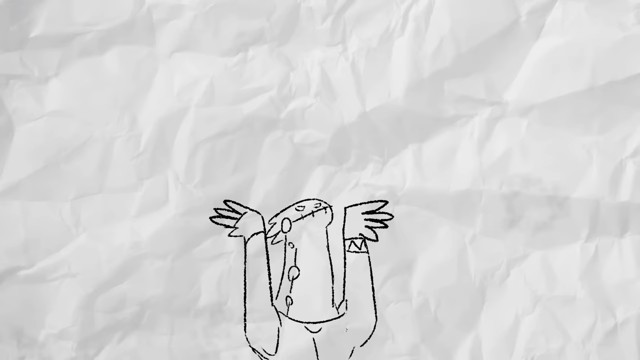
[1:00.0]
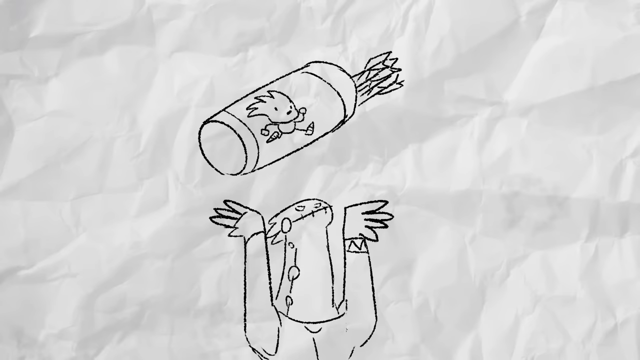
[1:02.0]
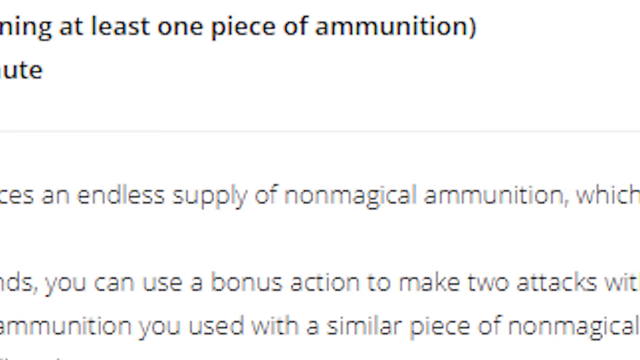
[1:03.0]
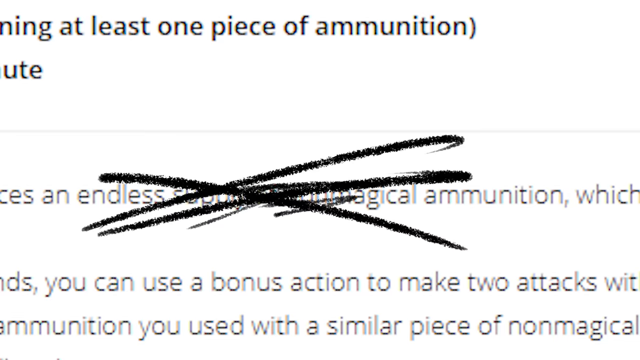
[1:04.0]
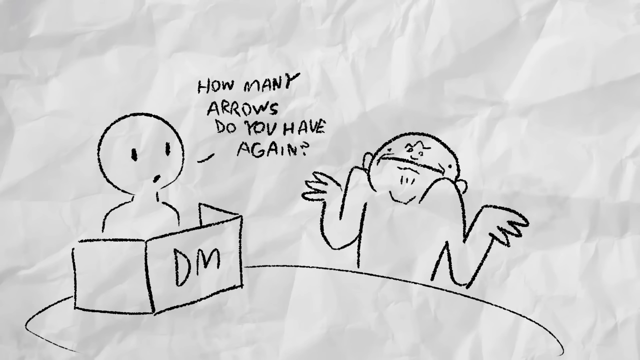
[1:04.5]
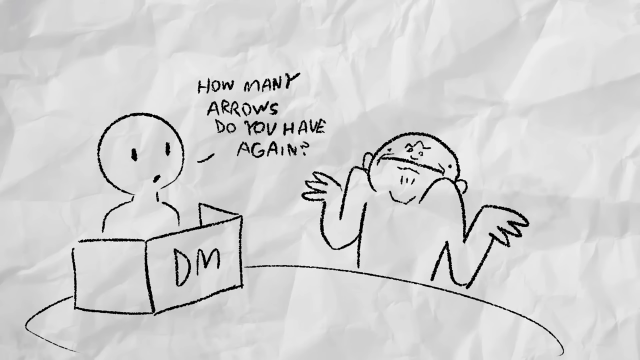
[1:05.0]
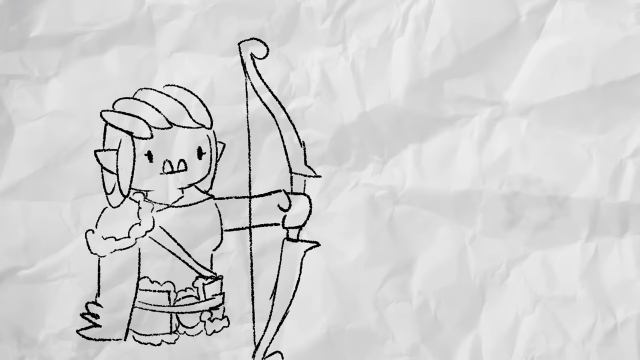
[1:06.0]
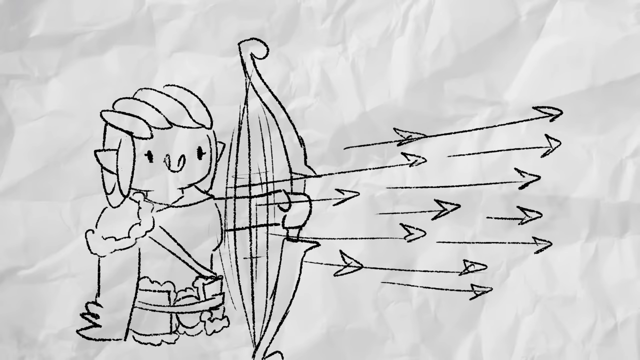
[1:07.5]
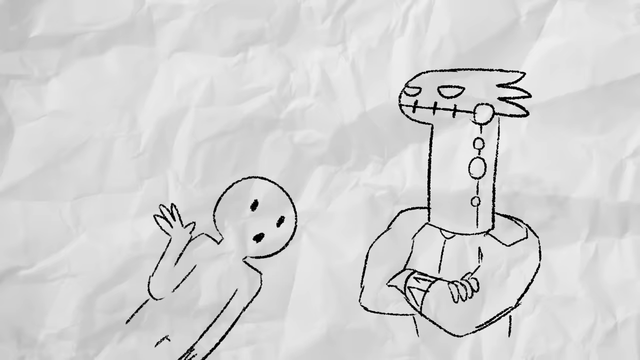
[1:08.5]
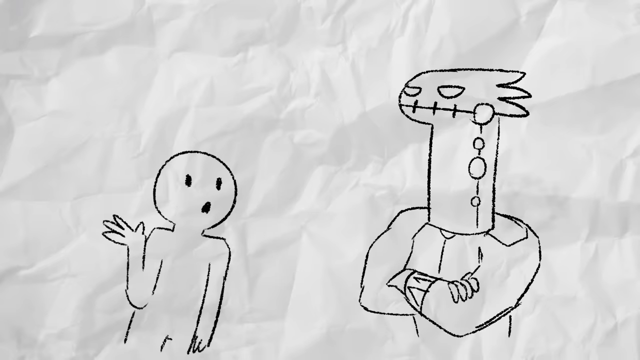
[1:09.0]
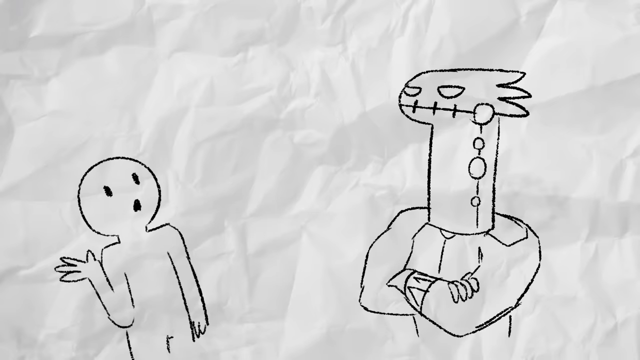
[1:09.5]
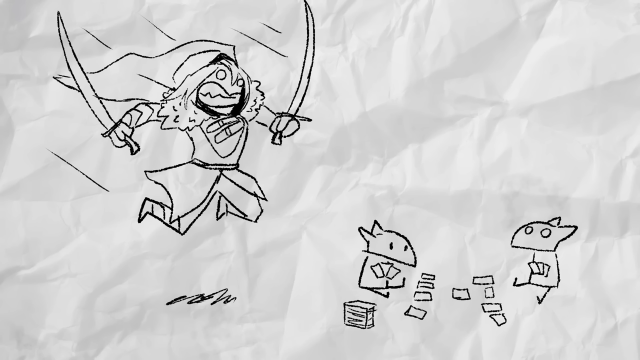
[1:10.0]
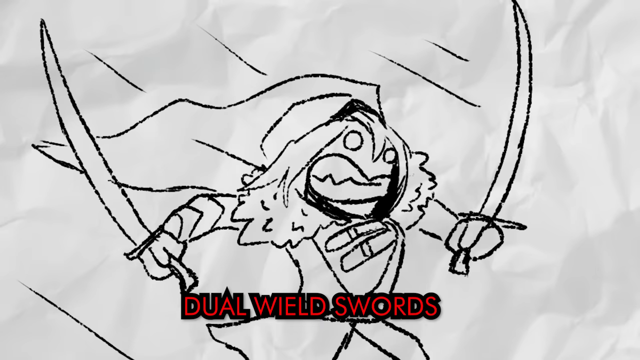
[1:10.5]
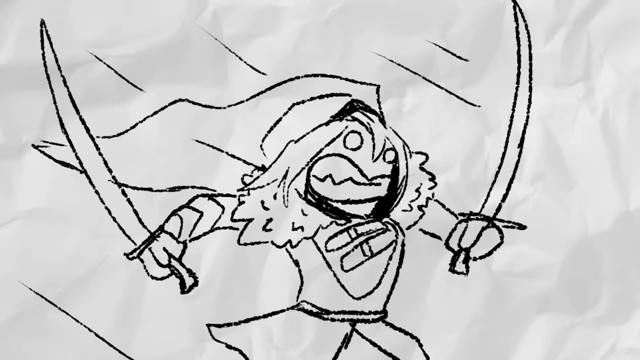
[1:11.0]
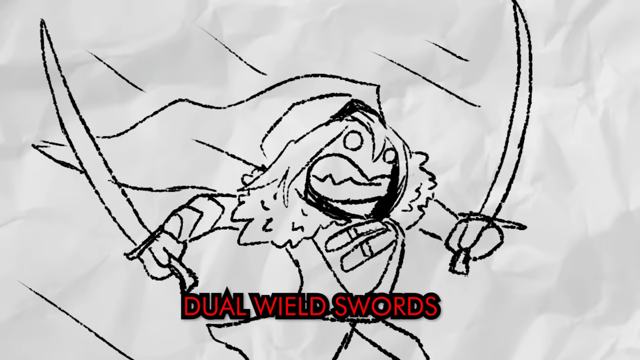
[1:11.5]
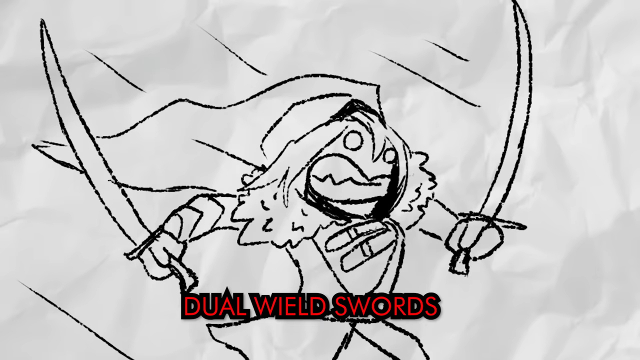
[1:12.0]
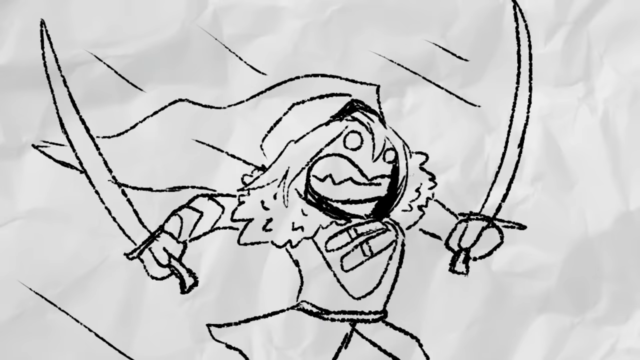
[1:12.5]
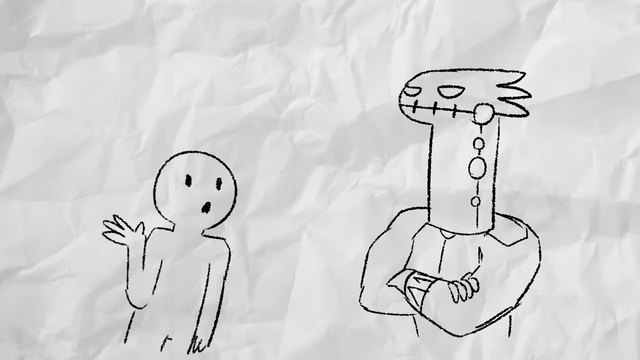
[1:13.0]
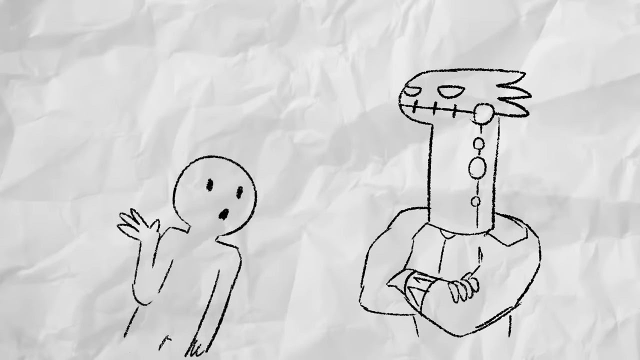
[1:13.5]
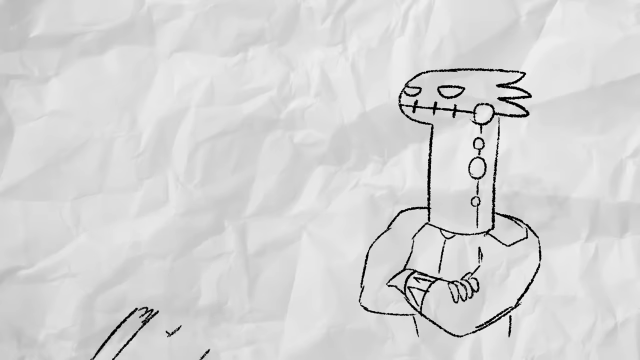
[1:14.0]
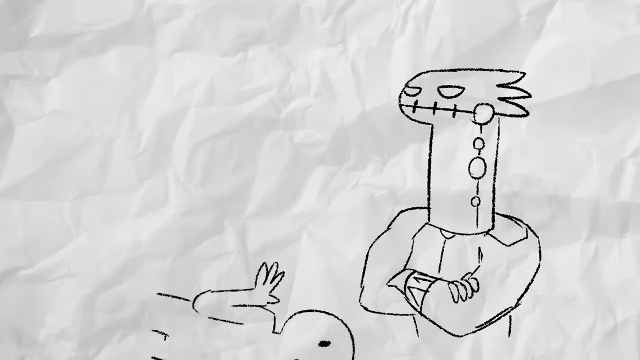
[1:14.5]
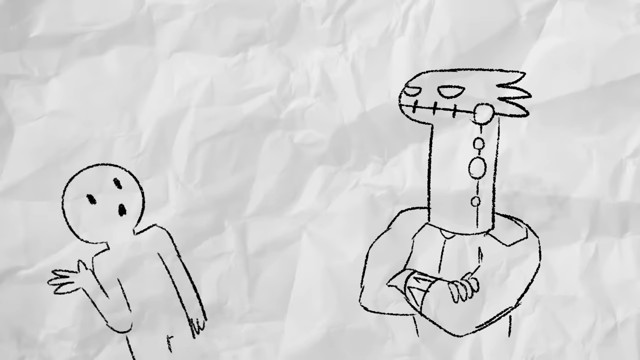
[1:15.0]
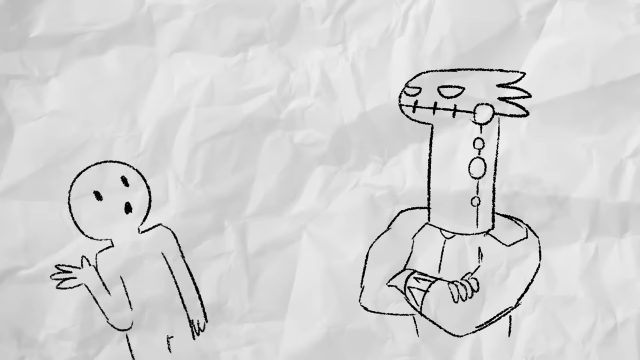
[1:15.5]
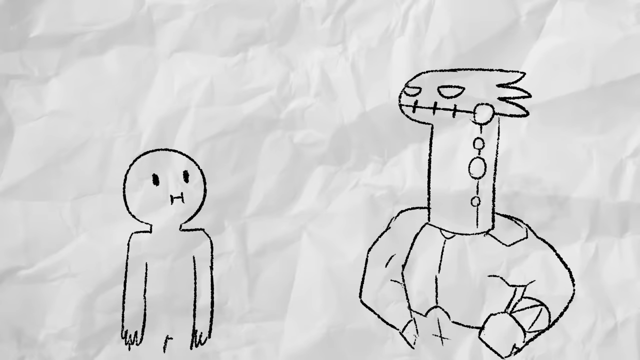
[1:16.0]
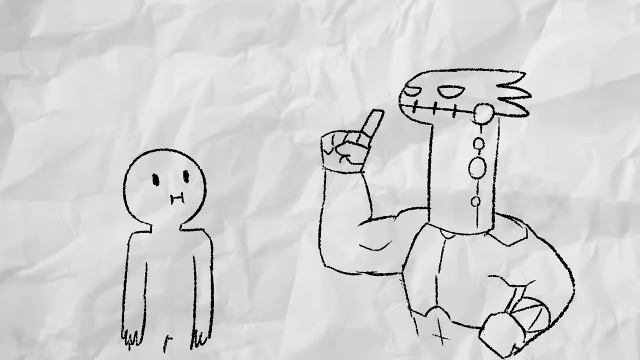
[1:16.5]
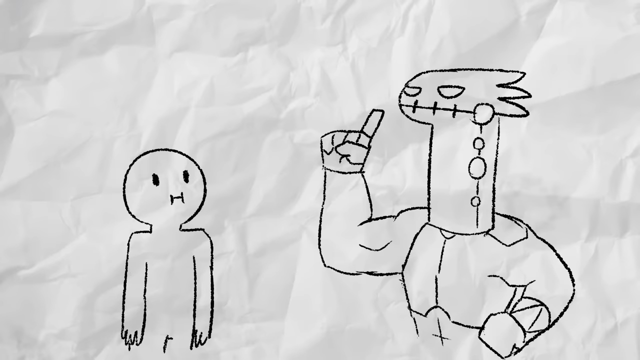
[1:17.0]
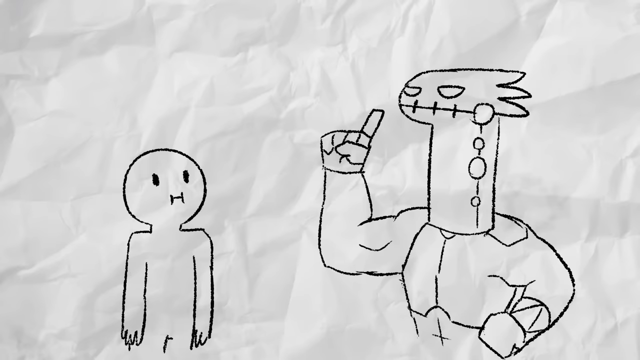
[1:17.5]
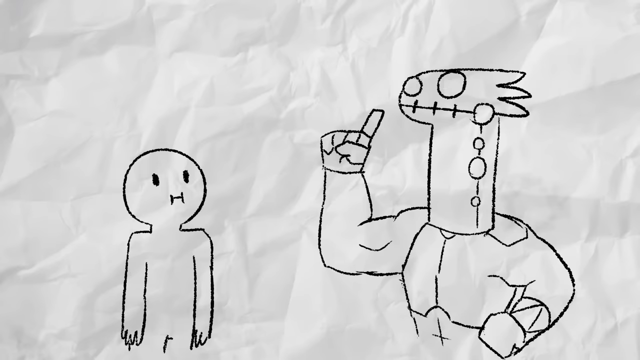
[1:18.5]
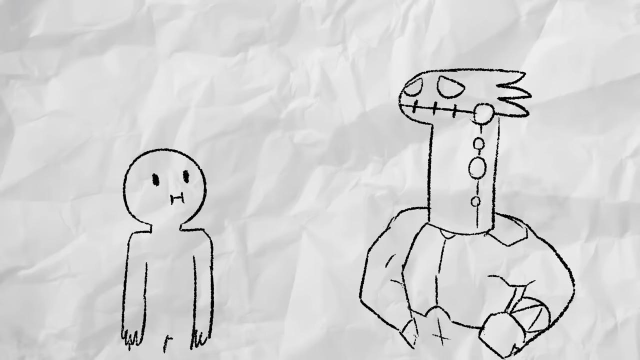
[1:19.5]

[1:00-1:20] One of the lizard people, drawn in black, has their hands up, with a thing that holds bows and arrows above them. Text says "at least one piece of ammunition," something is shown crossed out, and then it says "how many arrows do you have again?" The person looks confused at being asked. It cuts to somebody holding a bow and arrow, seemingly a woman, shooting many arrows, then to somebody confused. It cuts back to the person with the dual-wield swords jumping towards the kids, with "dual-wield swords" on the screen in red. Somebody asking questions spins up and down towards the lizard person, who puts their finger up and looks confused.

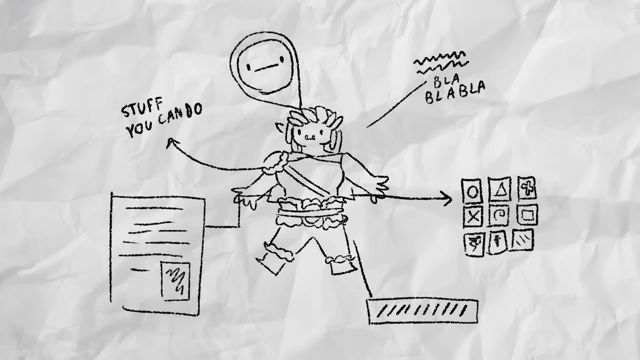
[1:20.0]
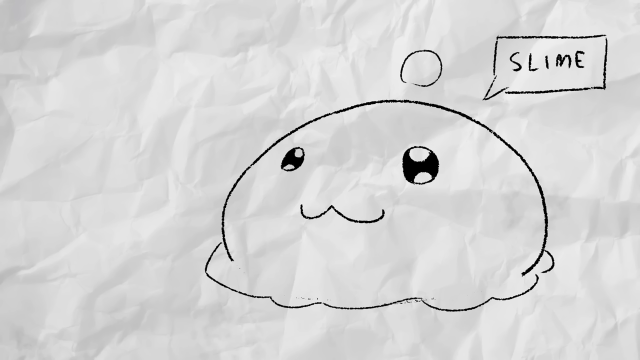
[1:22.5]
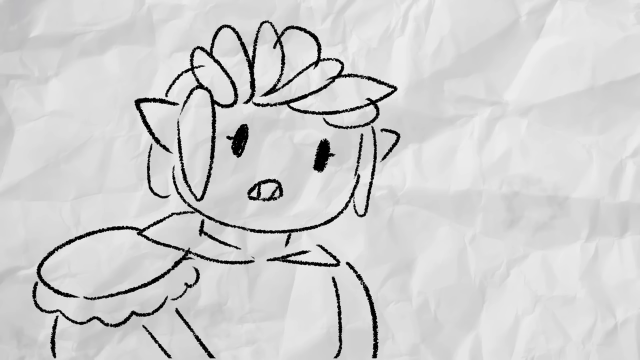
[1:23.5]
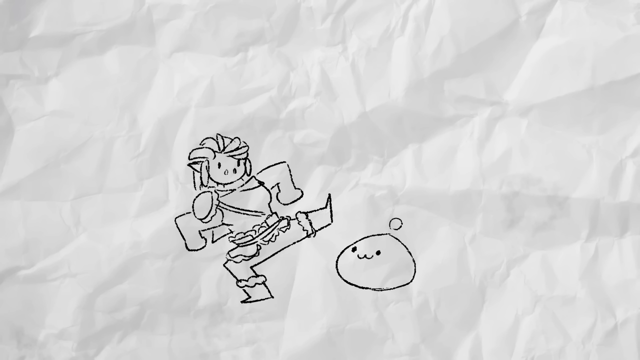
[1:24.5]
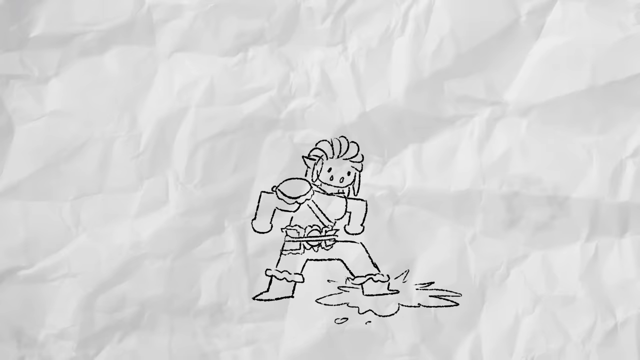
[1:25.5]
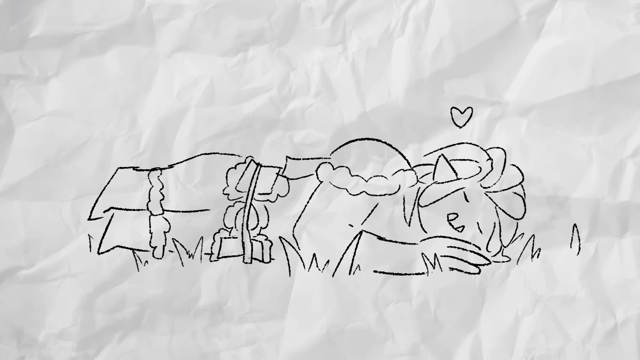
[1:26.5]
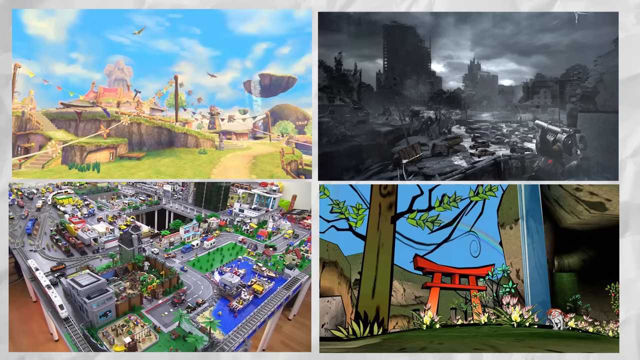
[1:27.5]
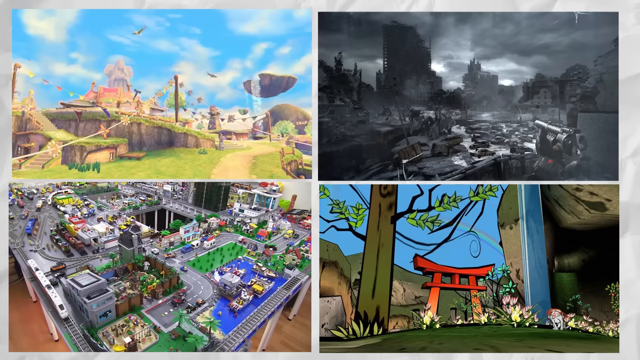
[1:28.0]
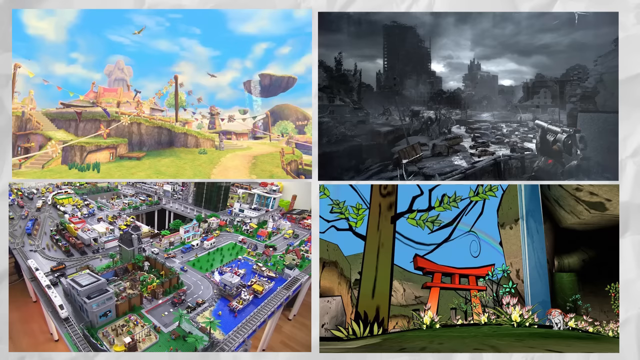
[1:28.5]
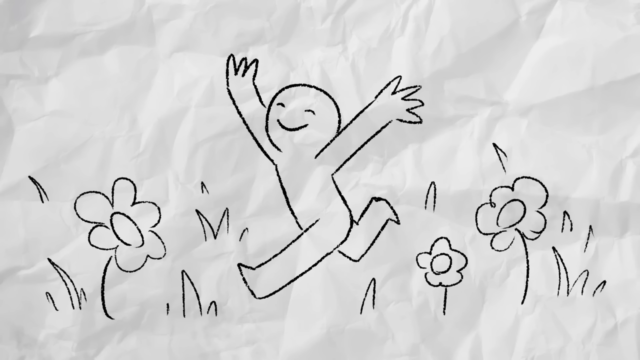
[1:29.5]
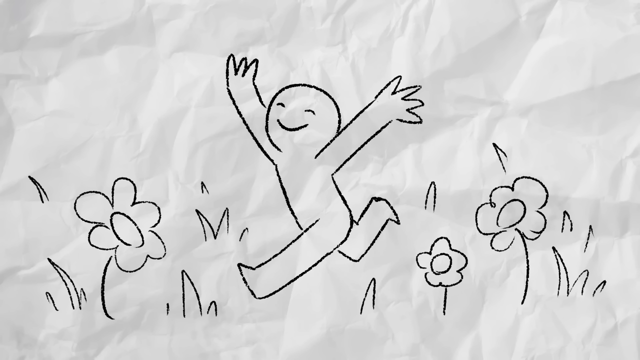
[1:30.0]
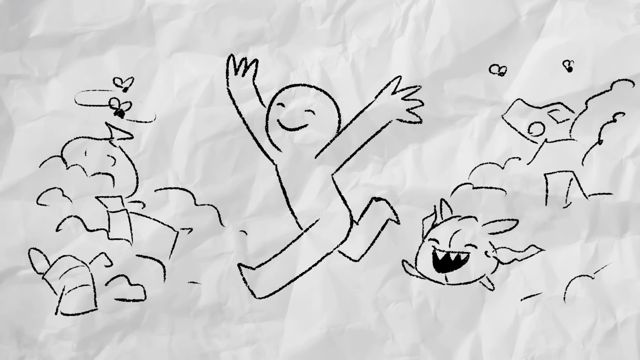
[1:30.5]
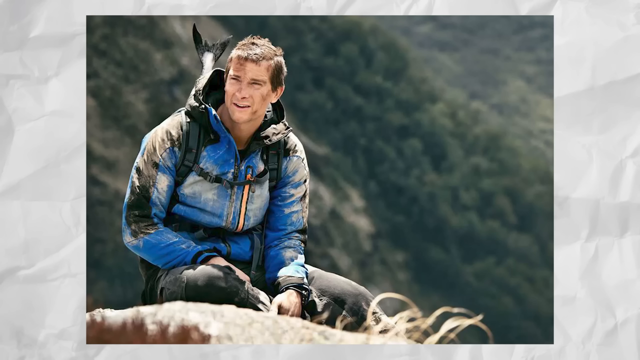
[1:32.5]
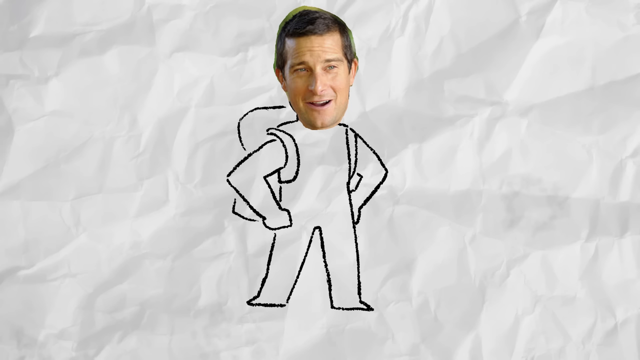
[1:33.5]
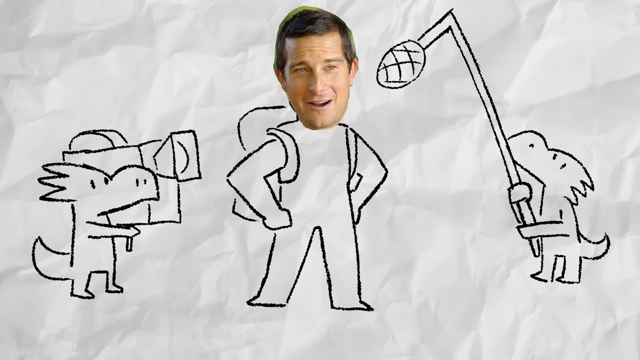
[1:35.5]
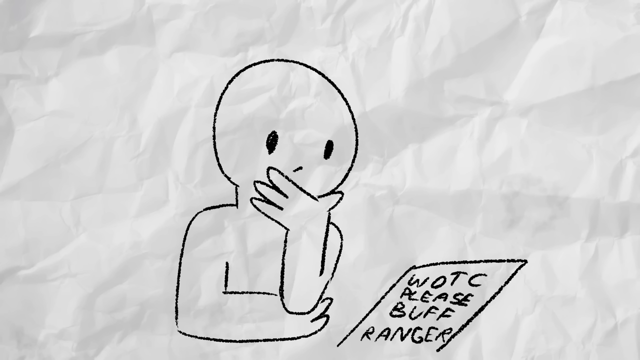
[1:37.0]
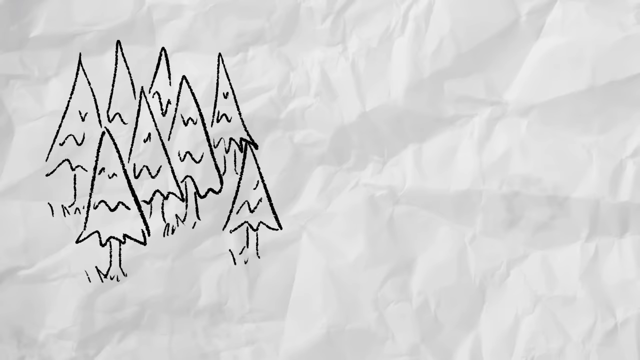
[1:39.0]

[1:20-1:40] A person is shown with an arrow pointing off of them and the words "stuff you can do," with "blah blah blah" to the right, a piece of paper to the left, and buttons to the right. A ball of slime appears with a speech bubble that says "slime." The person, a woman, looks very friendly and smiles, then steps on the slime ball, which explodes. The person is then laying on grass with a heart above them. It cuts to four different images: a city, hills, a destroyed village, and a Japanese area. Someone frolics with flowers. Bear Grylls is shown in nature, and then Bear Grylls' face appears on a comic person. A person contemplates something.